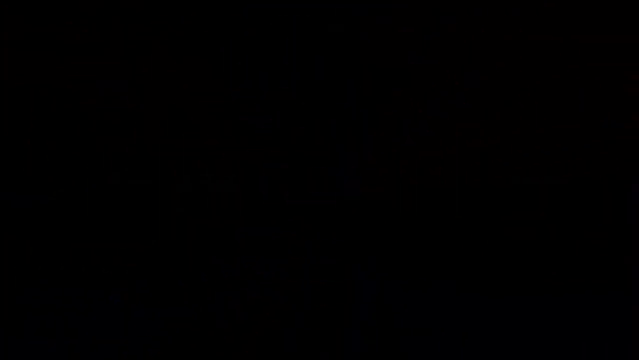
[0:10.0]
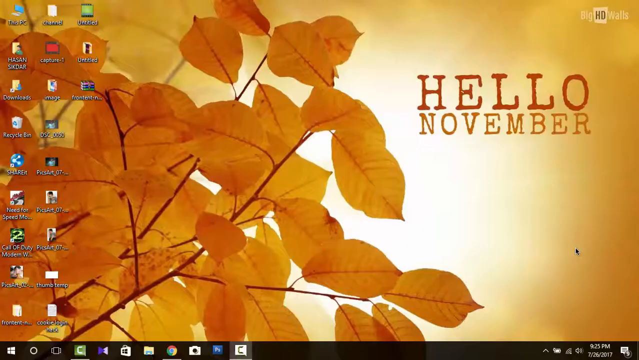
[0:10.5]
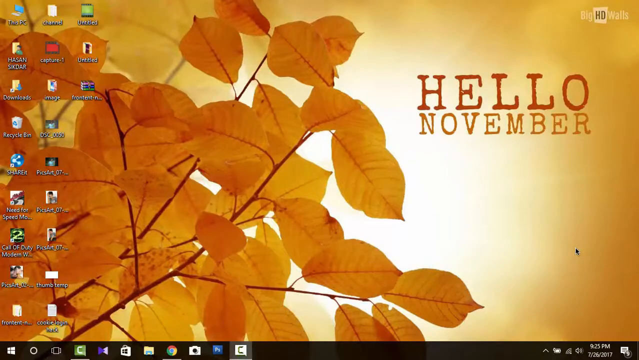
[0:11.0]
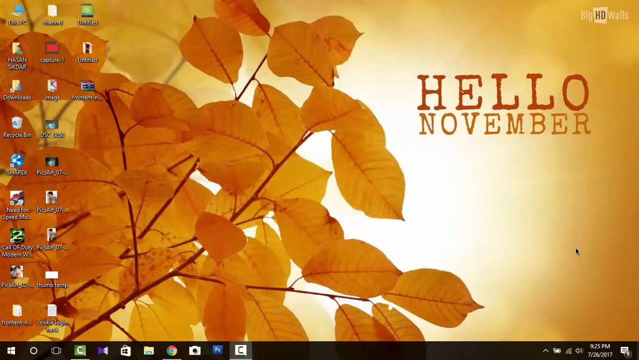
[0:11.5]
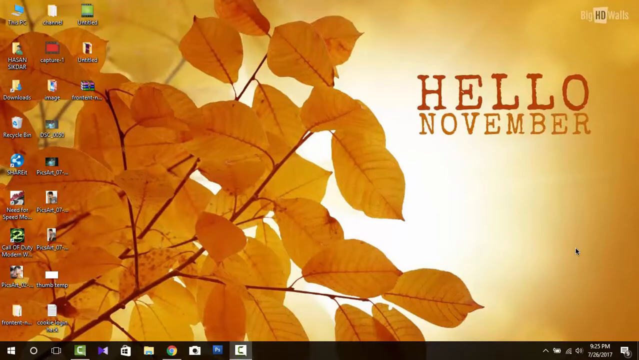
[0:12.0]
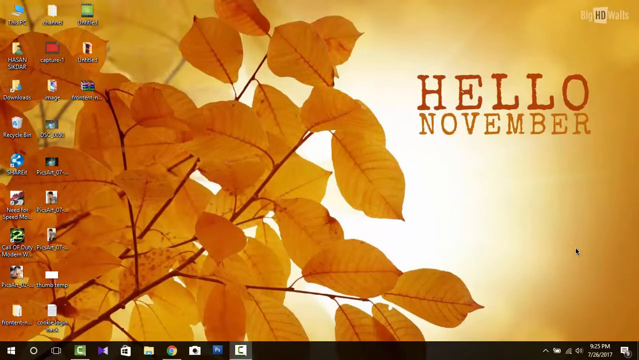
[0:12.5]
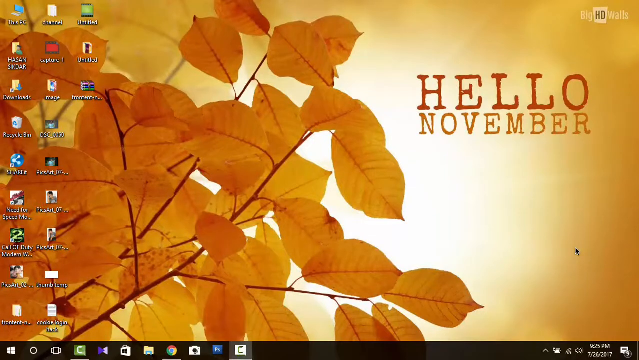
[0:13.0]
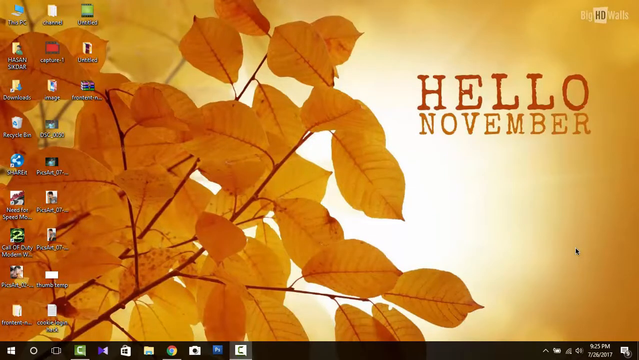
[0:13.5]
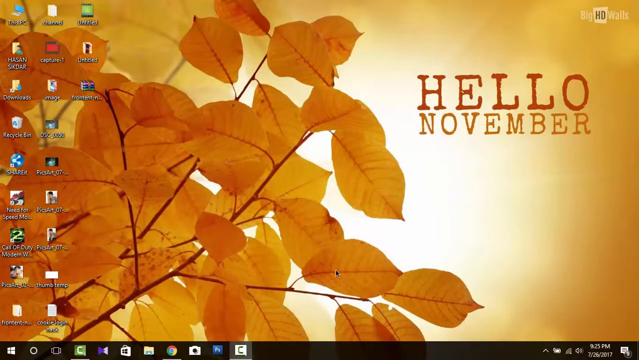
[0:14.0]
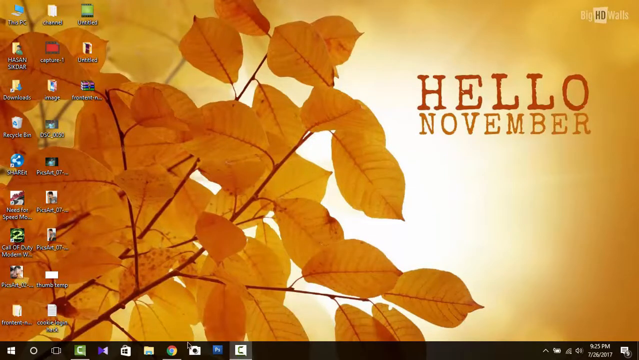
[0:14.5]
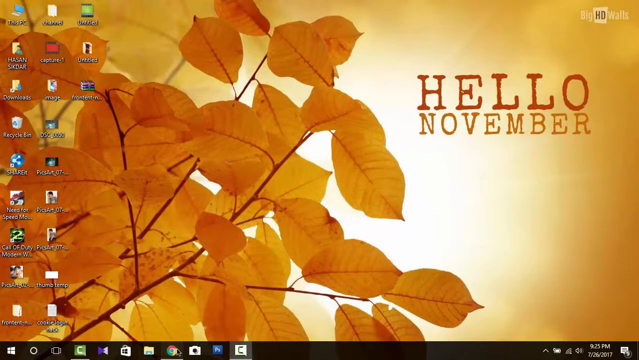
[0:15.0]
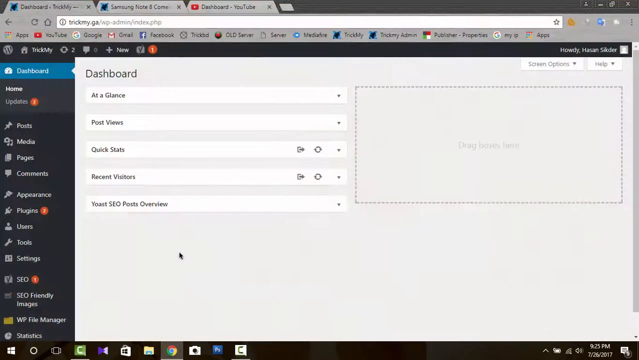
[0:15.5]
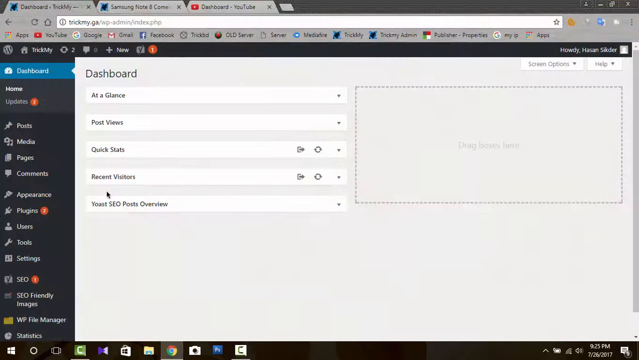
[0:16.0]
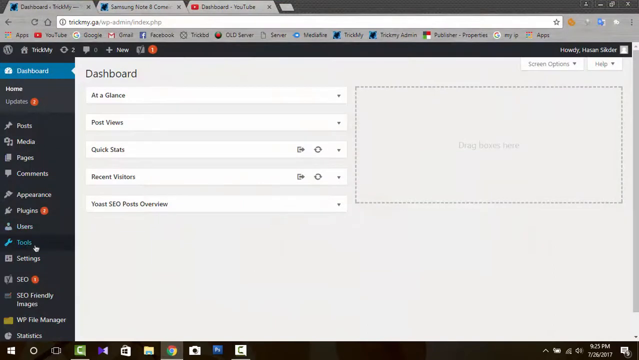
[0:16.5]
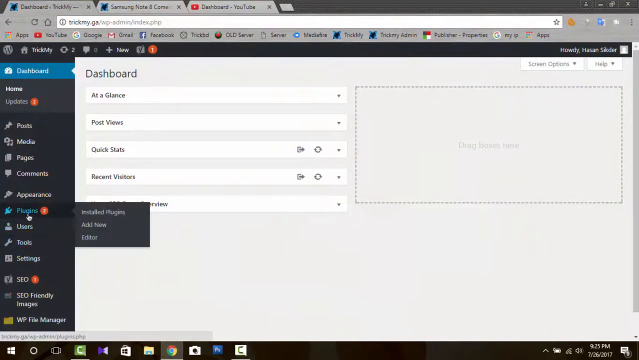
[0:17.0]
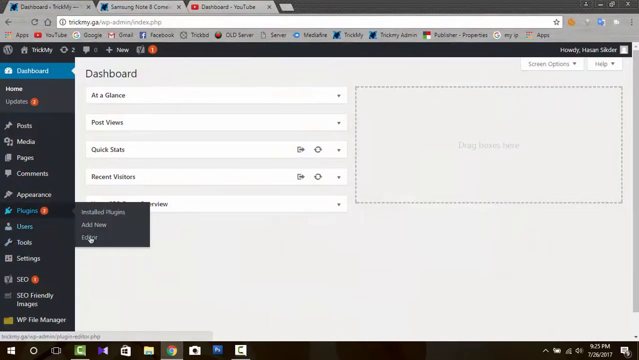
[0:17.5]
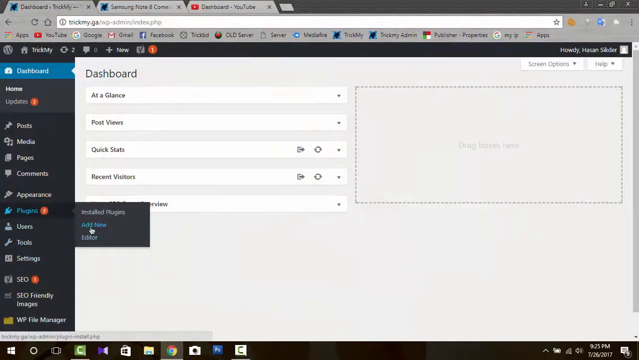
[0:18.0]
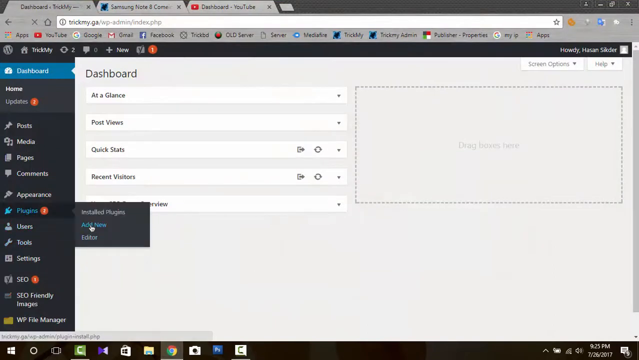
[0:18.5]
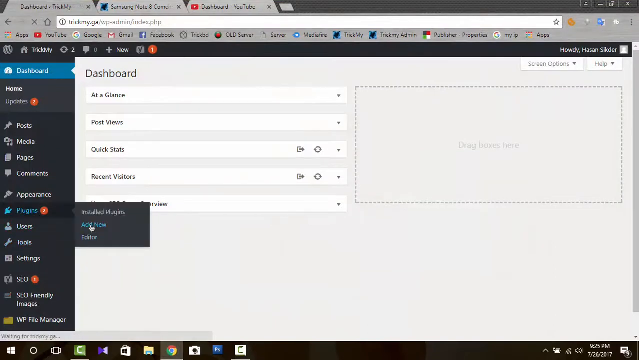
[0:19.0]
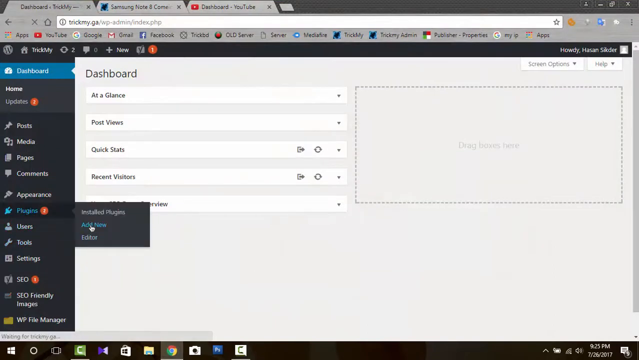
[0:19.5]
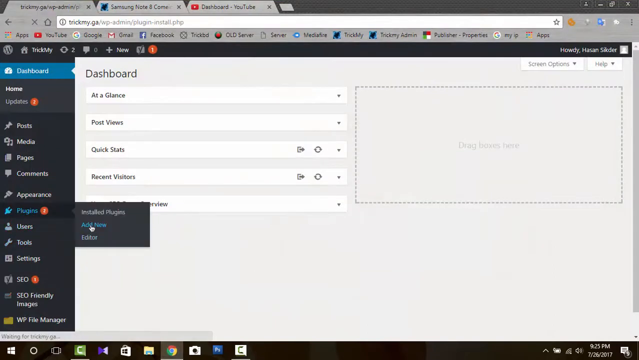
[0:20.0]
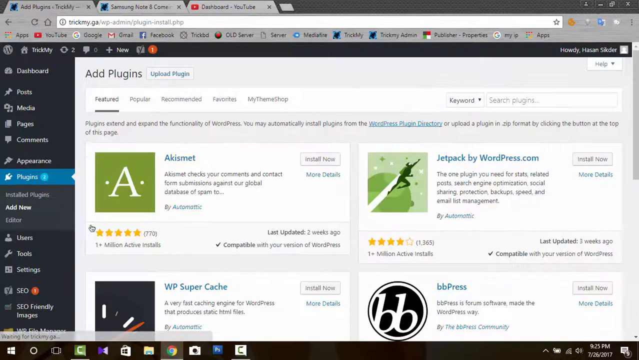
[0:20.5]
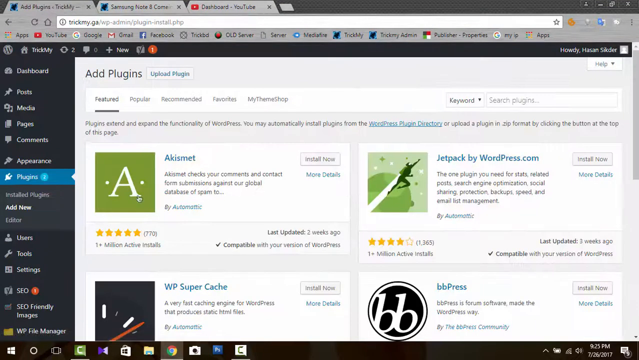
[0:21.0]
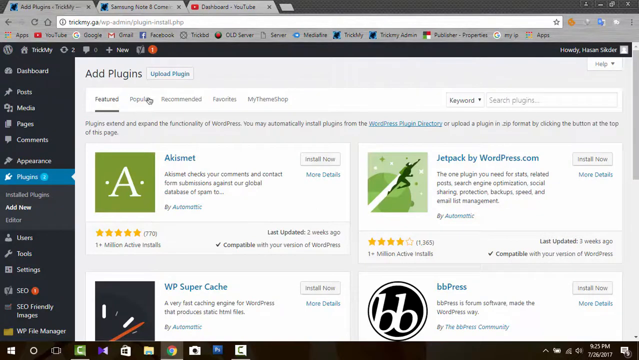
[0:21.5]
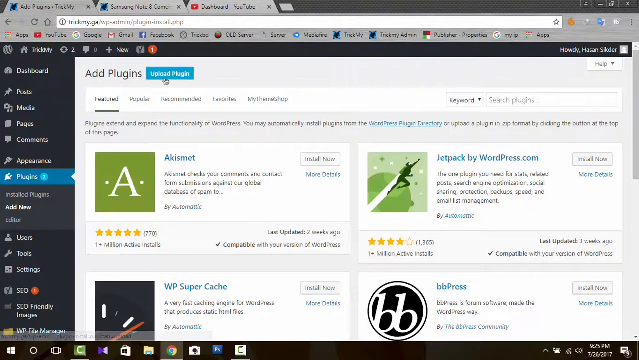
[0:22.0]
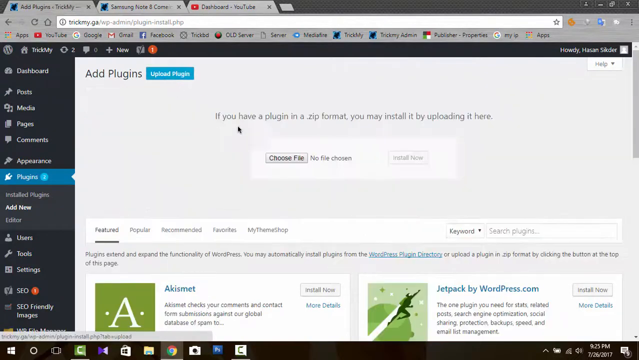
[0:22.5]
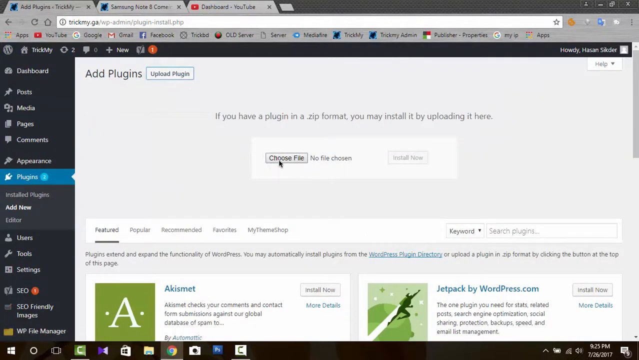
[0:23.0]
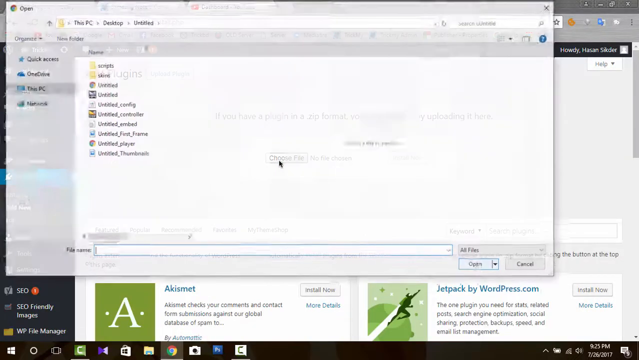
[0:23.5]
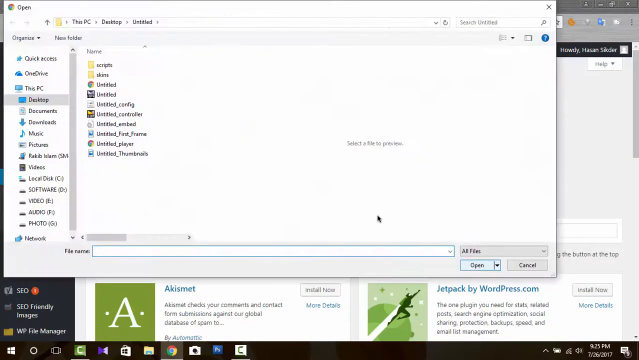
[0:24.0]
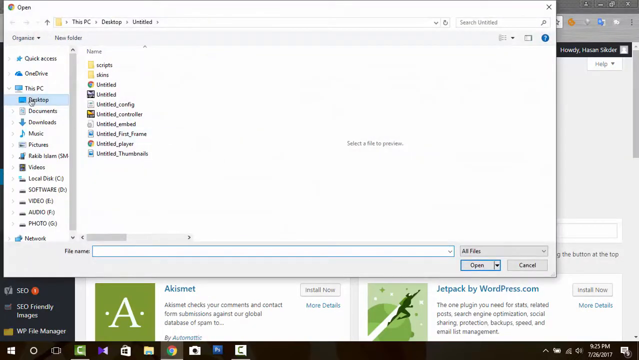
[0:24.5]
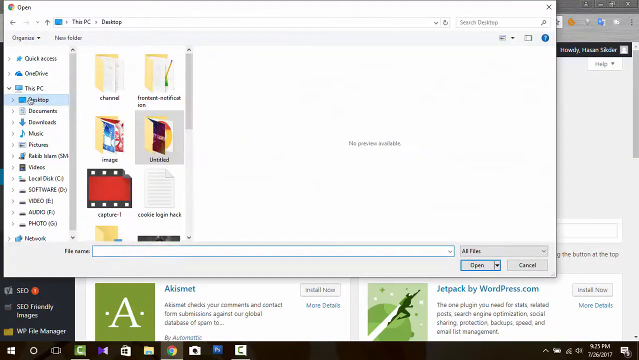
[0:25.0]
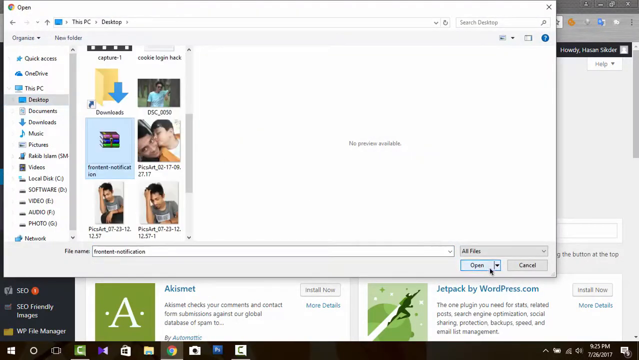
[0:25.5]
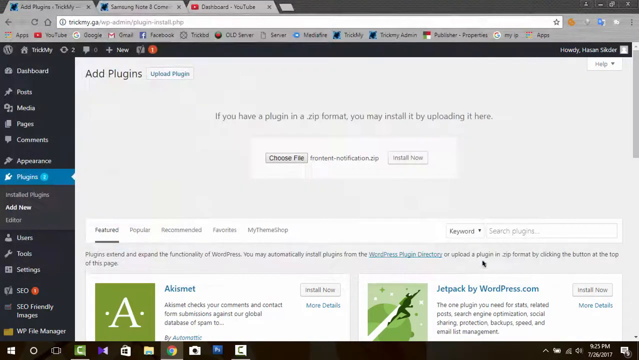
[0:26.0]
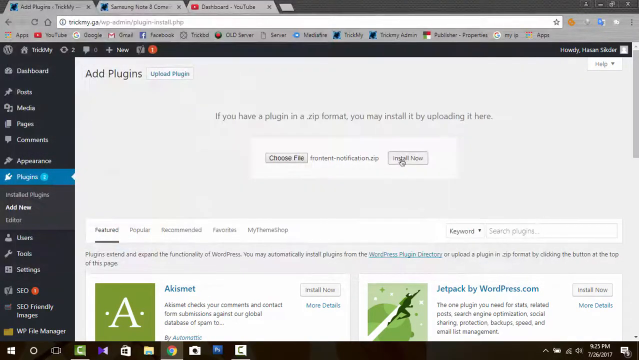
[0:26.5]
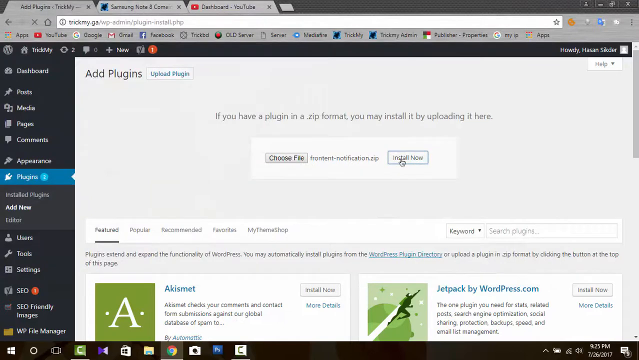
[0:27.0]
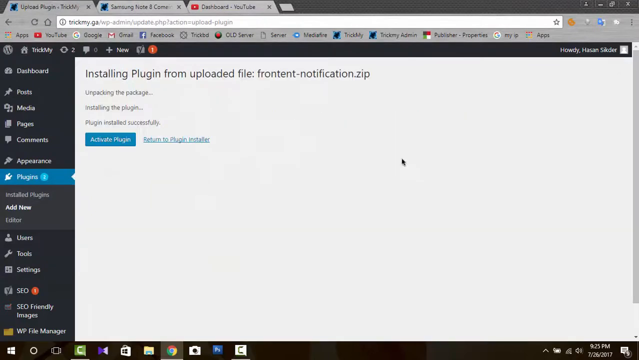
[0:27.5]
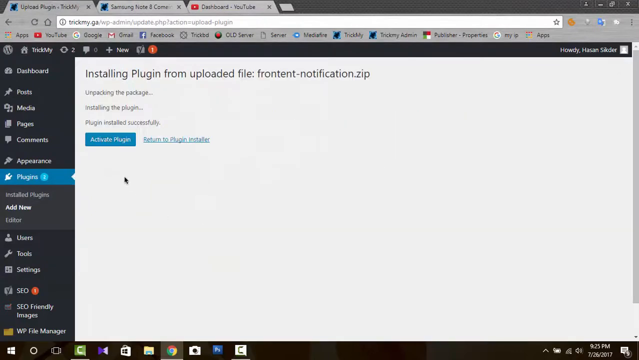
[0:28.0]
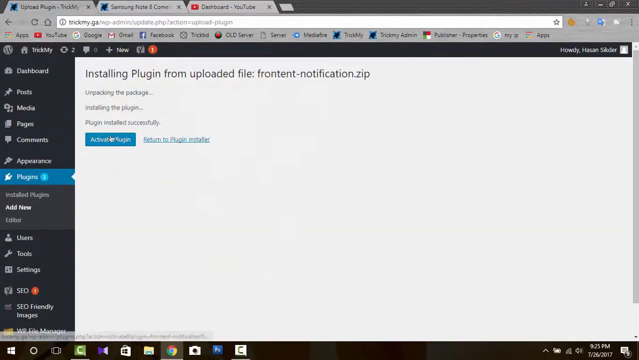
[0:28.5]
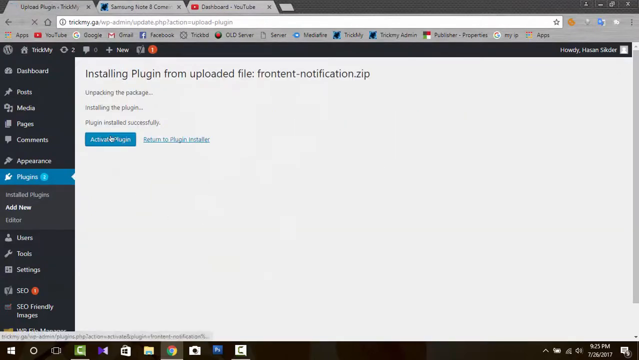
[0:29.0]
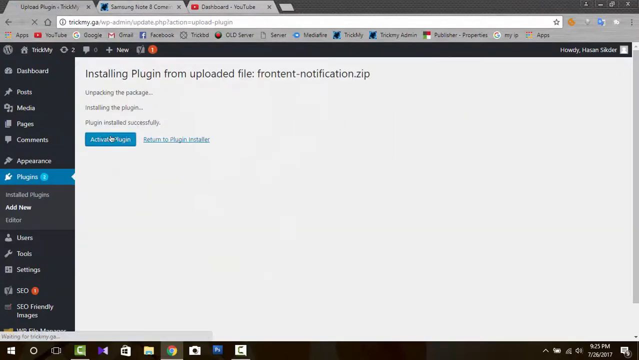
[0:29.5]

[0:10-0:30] A computer desktop appears, with the user's files neatly organized on the left side. The wallpaper is a detailed, autumn-based picture in a yellow-golden color scheme, with a plant with many yellow leaves on the left and the words "hello November" in the top right. The cursor moves to the bottom, and the user opens an internet browser. The cursor moves to the left side and over the plugins option, and the user selects add new, then selects a button labeled "upload plugin". The cursor moves to the middle to select a button that says "choose file". A browser window opens, and the user selects the desktop option on the left side.